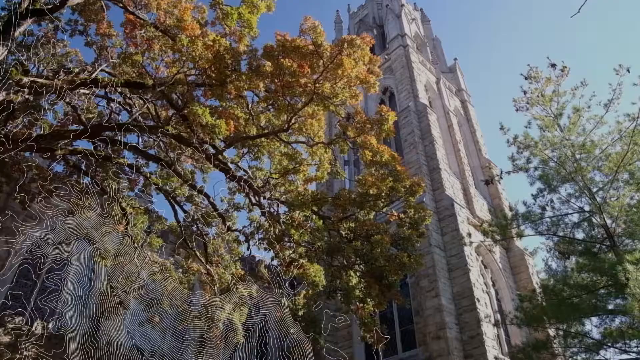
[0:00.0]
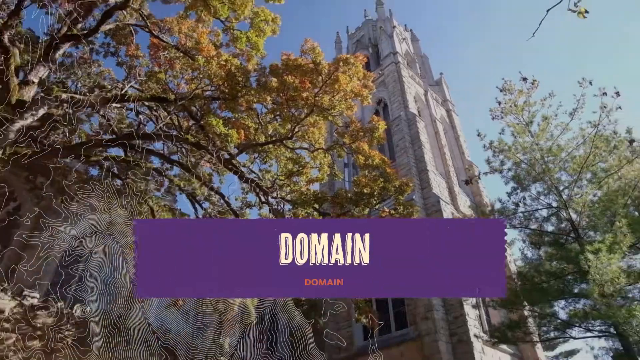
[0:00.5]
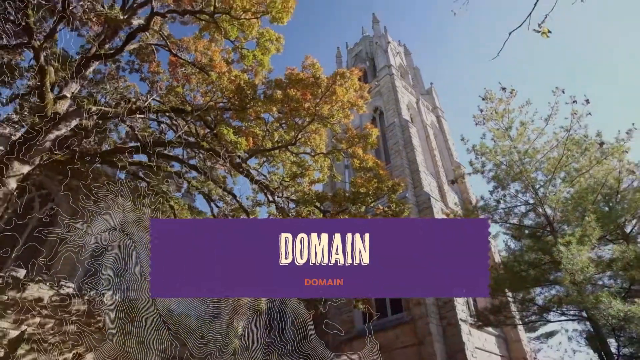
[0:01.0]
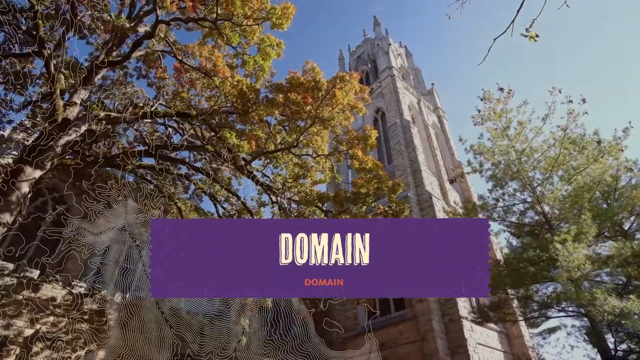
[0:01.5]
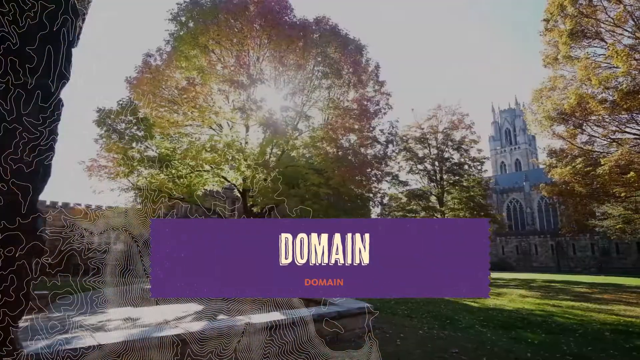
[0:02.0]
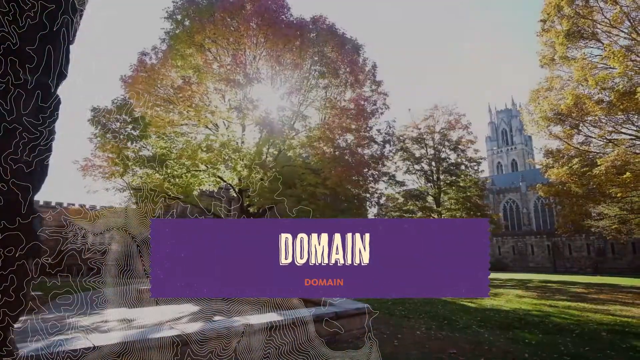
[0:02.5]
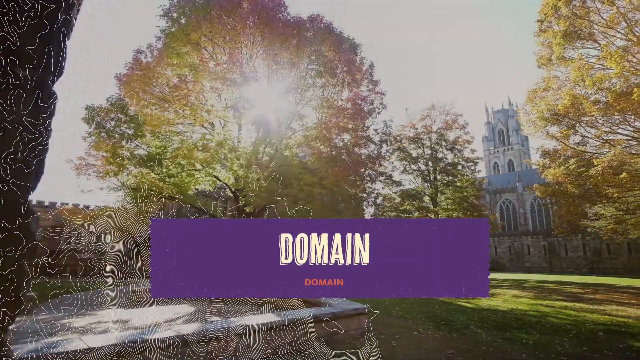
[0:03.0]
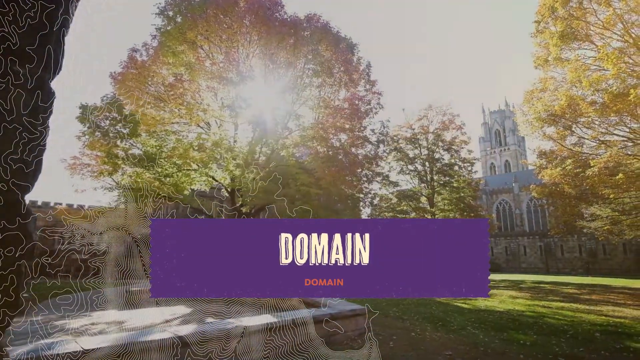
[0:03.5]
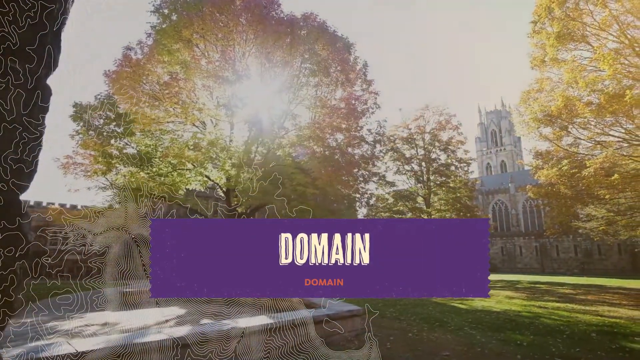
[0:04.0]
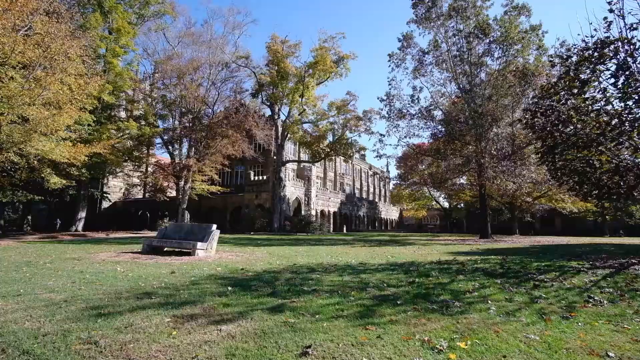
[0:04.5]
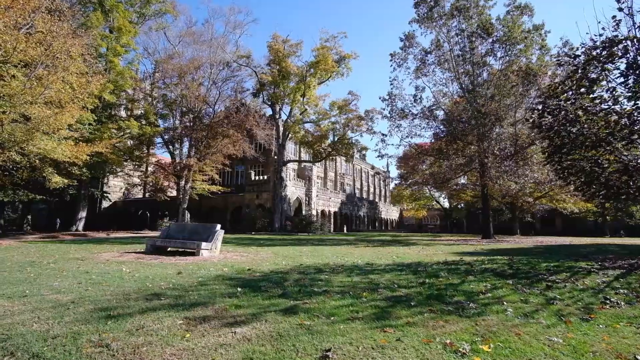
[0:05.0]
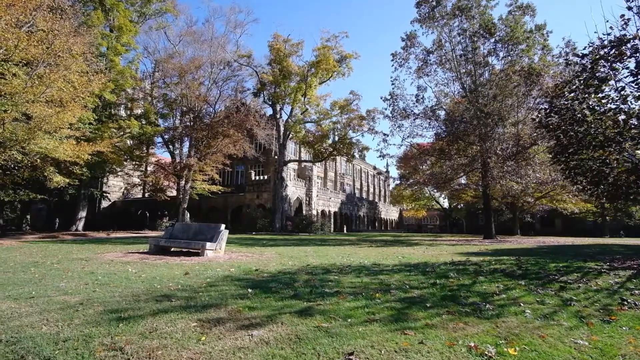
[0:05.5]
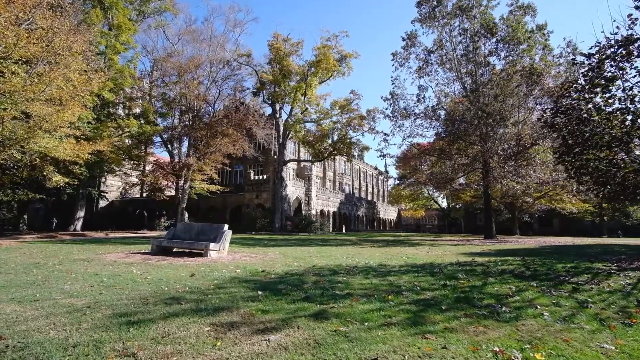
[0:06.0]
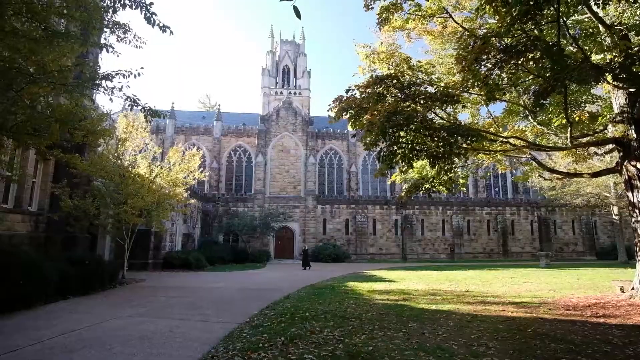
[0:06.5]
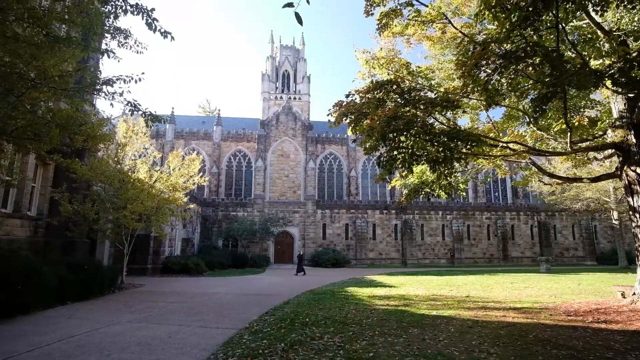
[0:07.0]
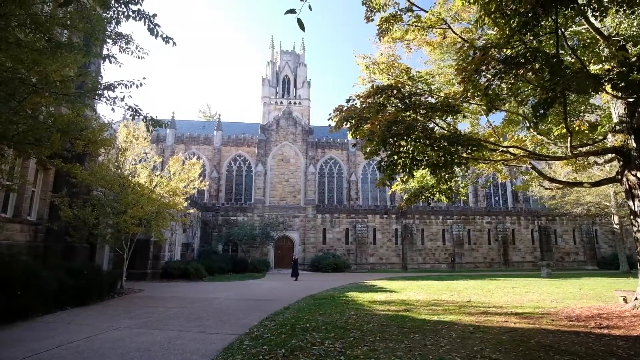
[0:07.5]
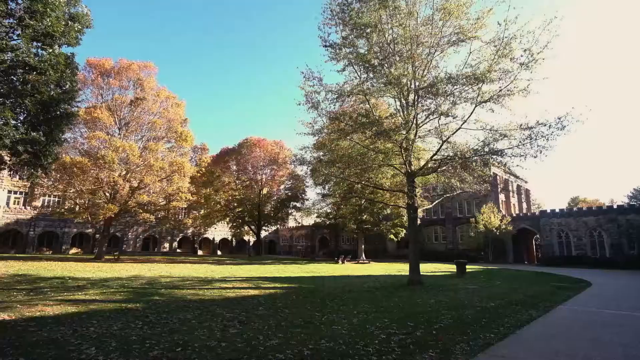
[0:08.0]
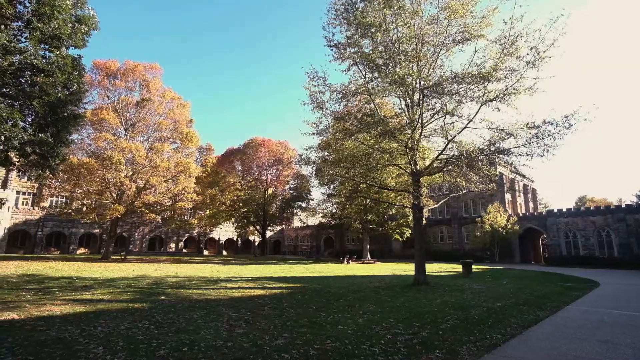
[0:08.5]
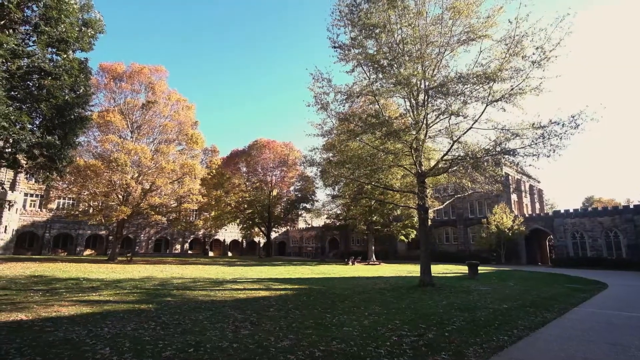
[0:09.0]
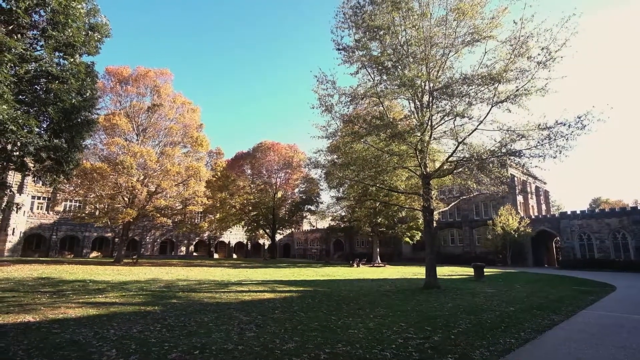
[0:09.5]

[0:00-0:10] A tall building with a few trees appears, and the video cuts quickly between pictures of the same place, showing a garden with very tall, luscious-looking trees. A banner in the middle reads "domain" in purple with white letters. Next comes a bench in the middle of green grass, with trees and the stone building behind it. More footage shows the trees and the building behind them as a person in a black outfit walks along the cement paths.